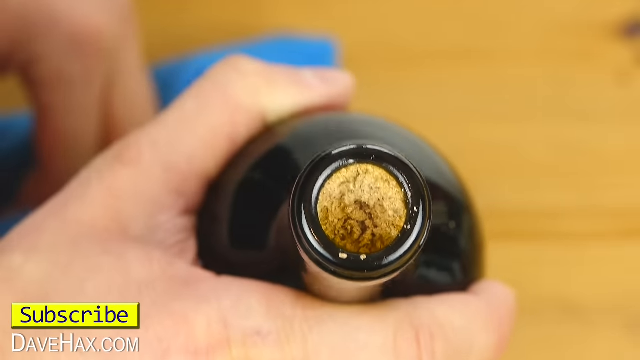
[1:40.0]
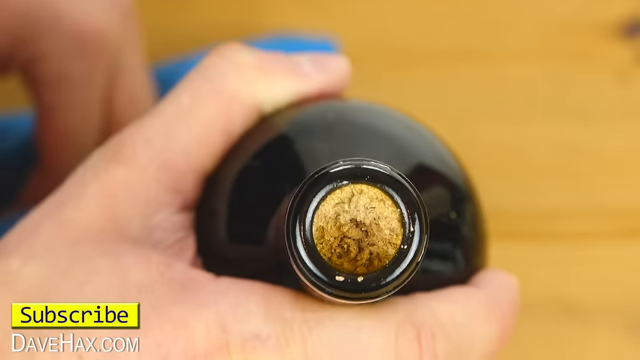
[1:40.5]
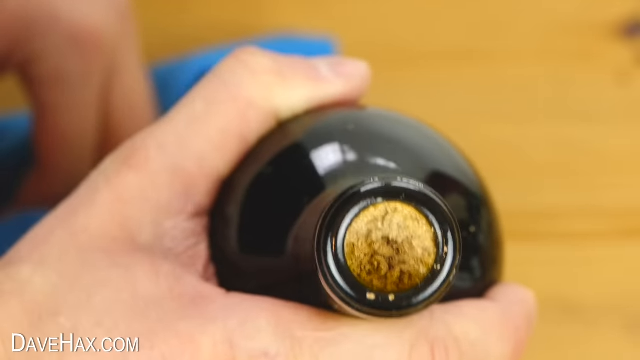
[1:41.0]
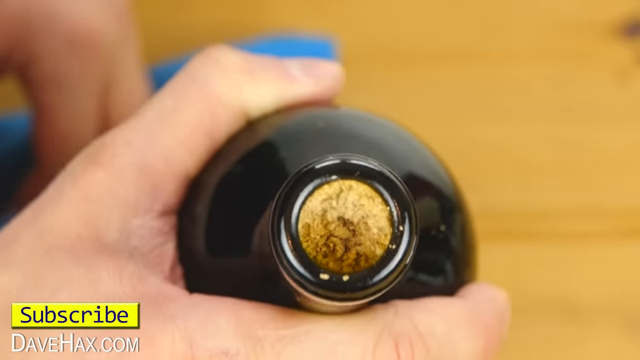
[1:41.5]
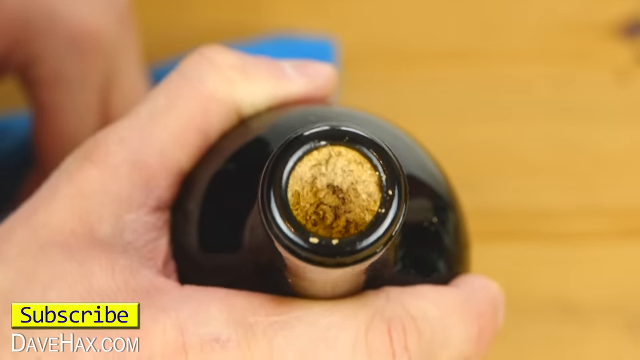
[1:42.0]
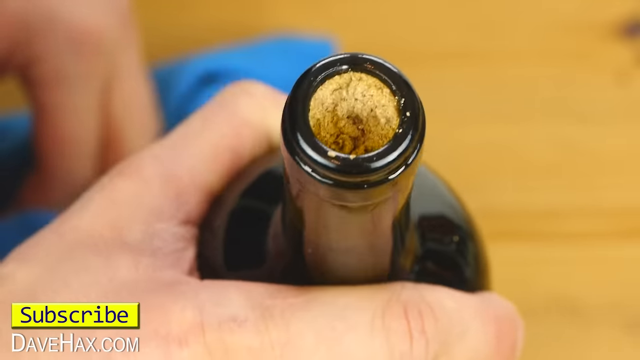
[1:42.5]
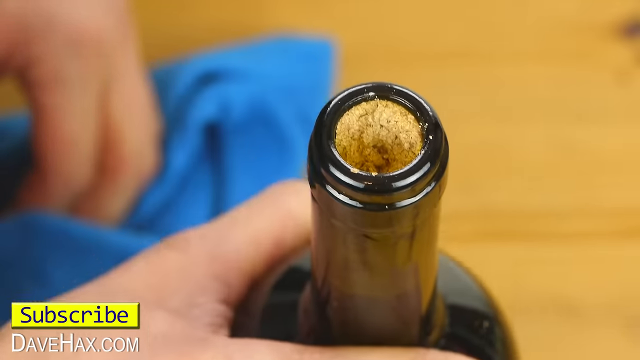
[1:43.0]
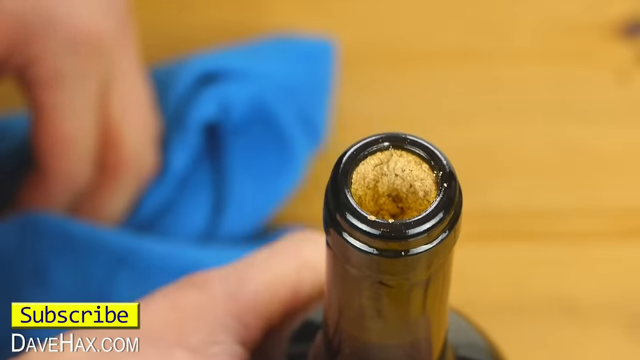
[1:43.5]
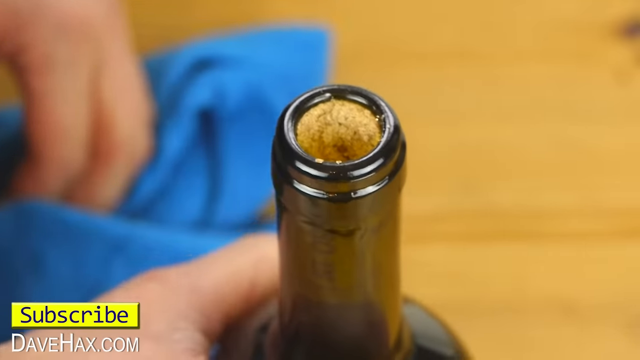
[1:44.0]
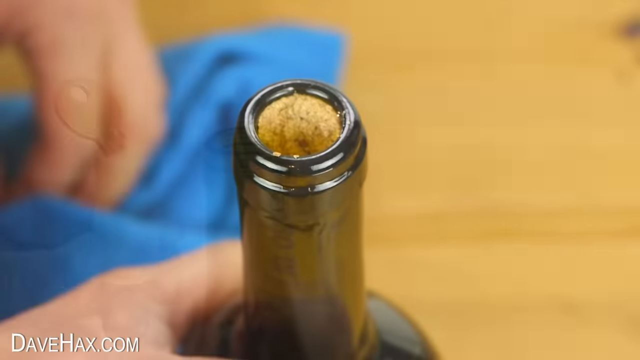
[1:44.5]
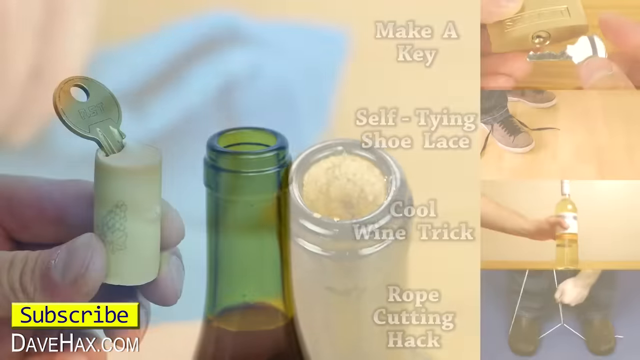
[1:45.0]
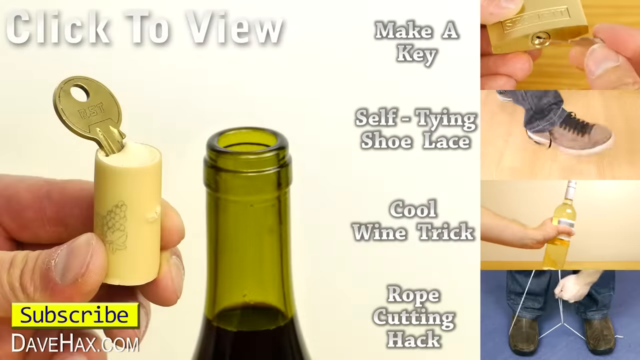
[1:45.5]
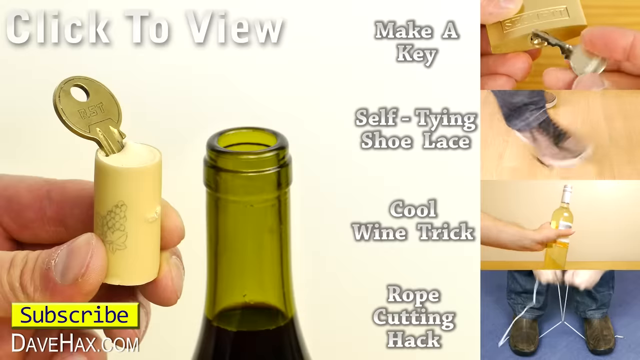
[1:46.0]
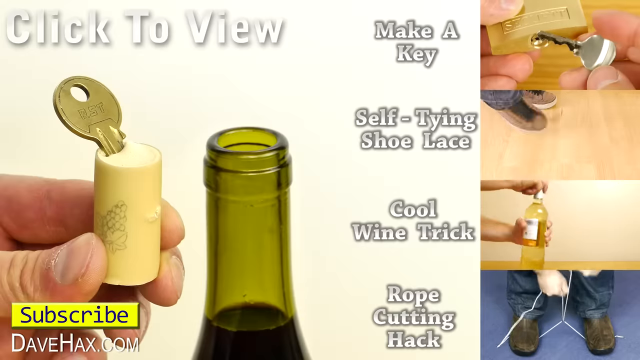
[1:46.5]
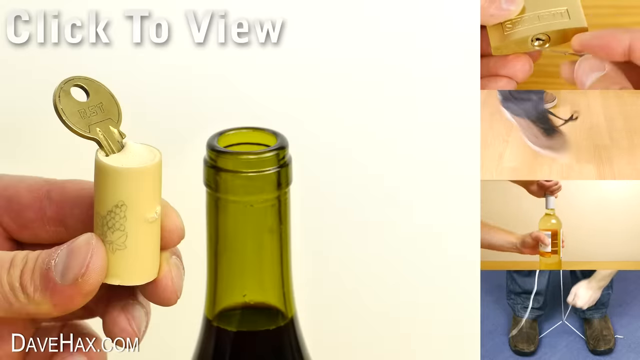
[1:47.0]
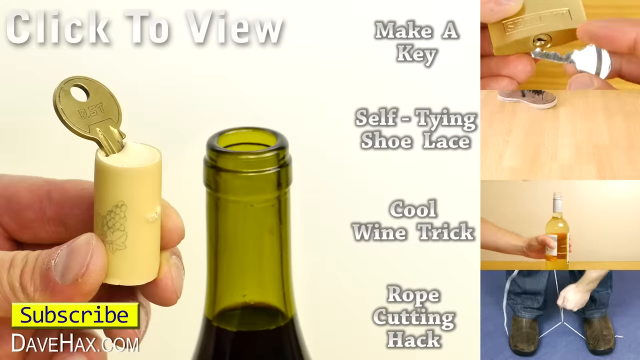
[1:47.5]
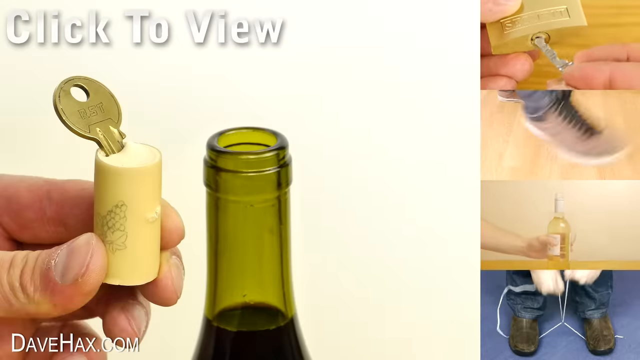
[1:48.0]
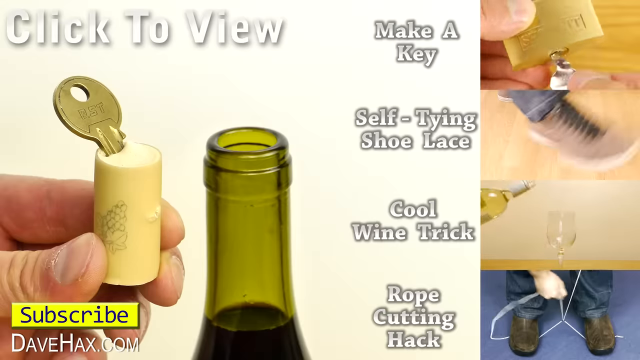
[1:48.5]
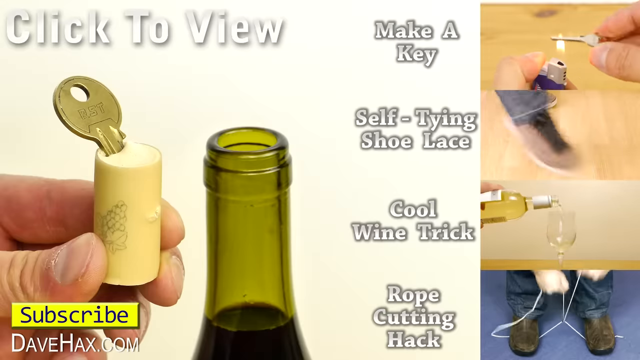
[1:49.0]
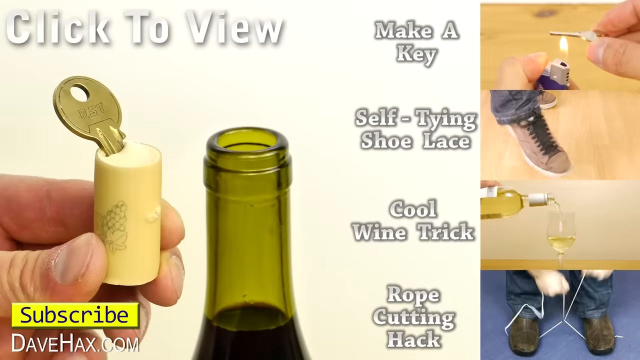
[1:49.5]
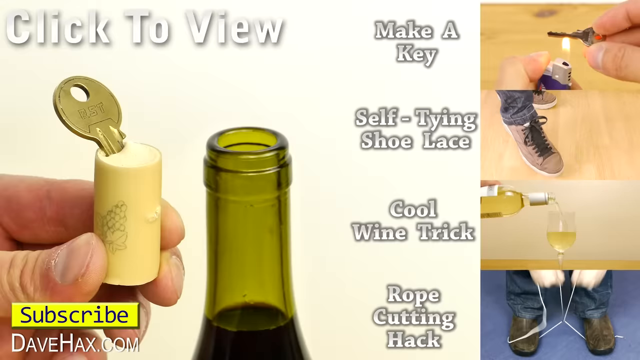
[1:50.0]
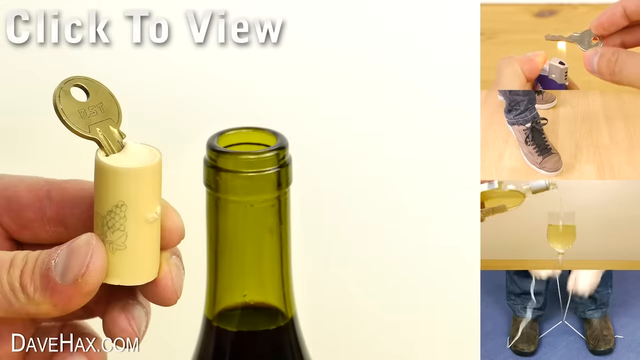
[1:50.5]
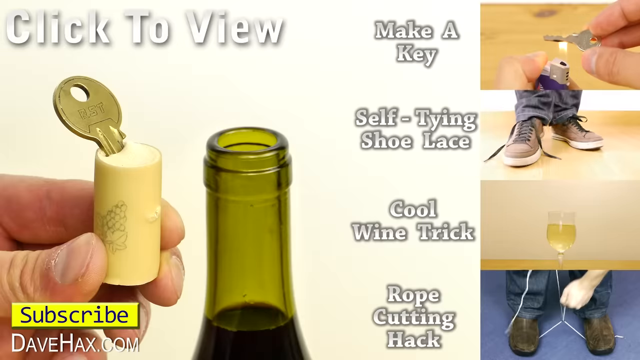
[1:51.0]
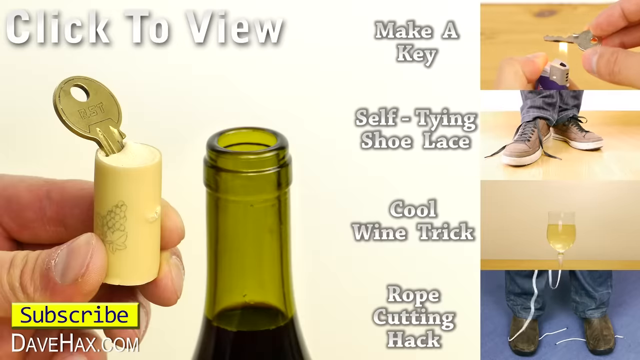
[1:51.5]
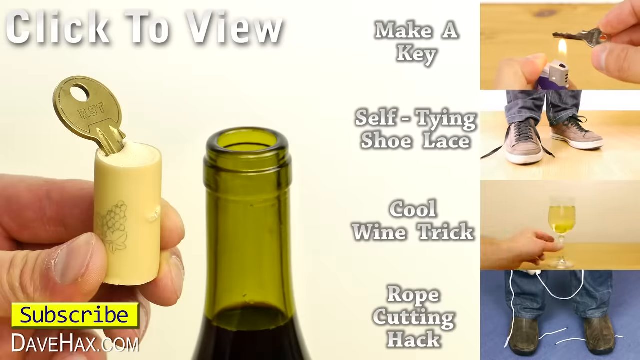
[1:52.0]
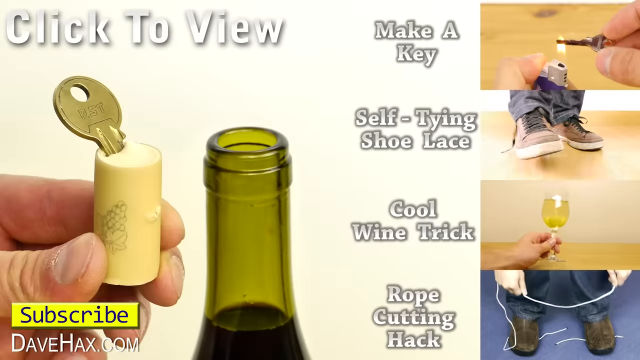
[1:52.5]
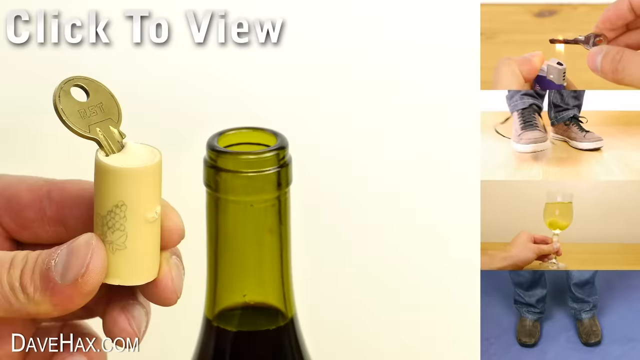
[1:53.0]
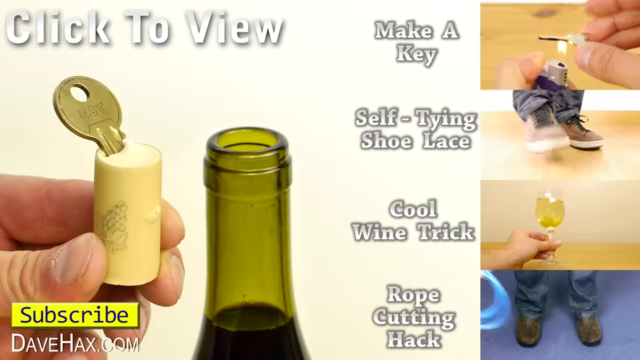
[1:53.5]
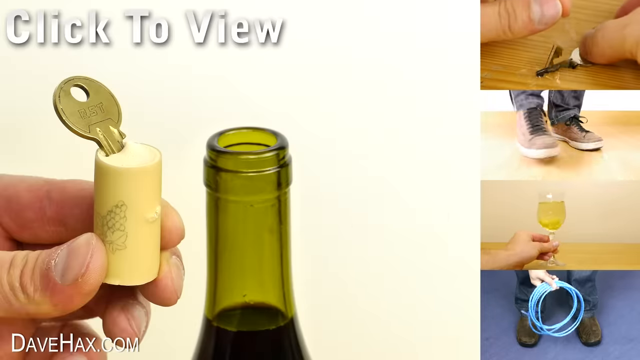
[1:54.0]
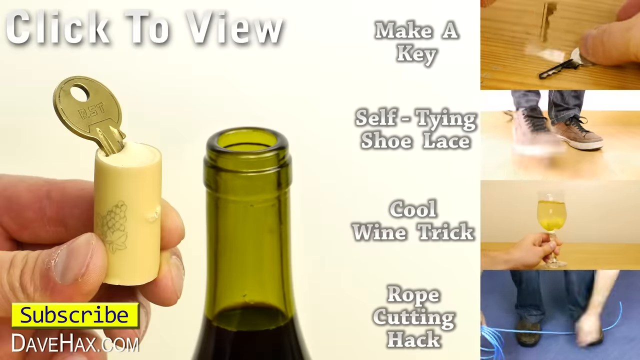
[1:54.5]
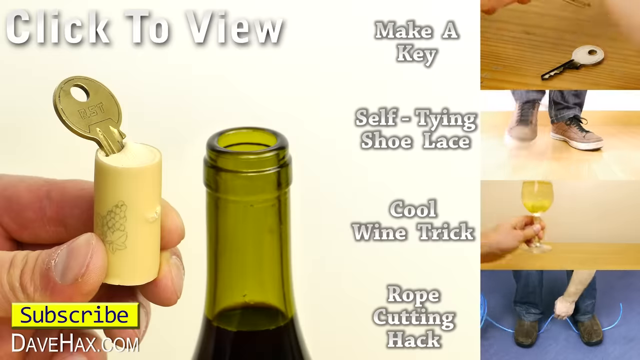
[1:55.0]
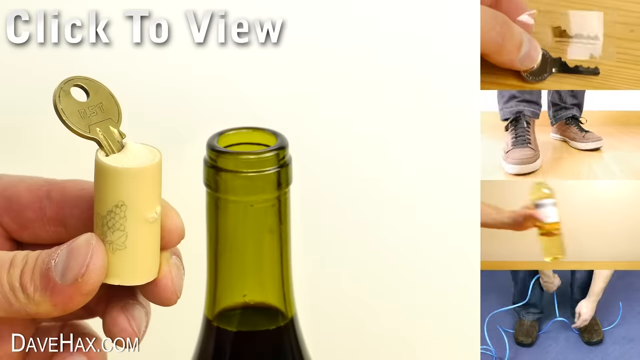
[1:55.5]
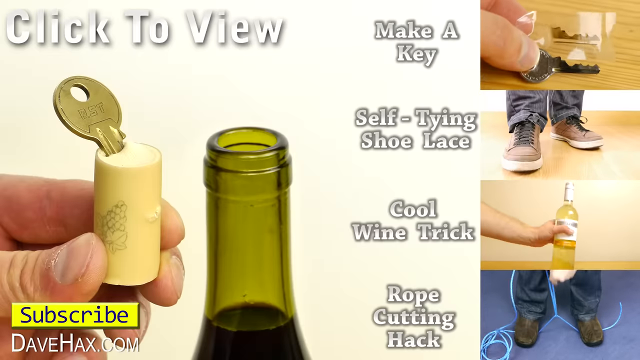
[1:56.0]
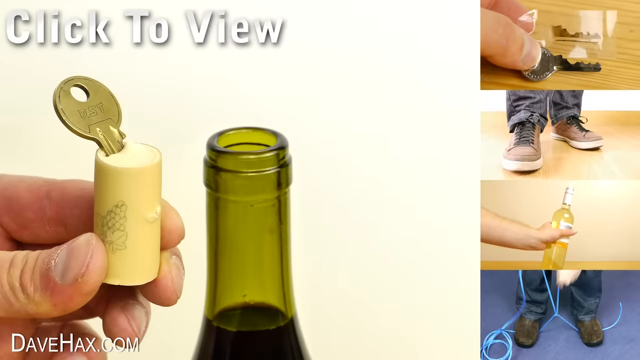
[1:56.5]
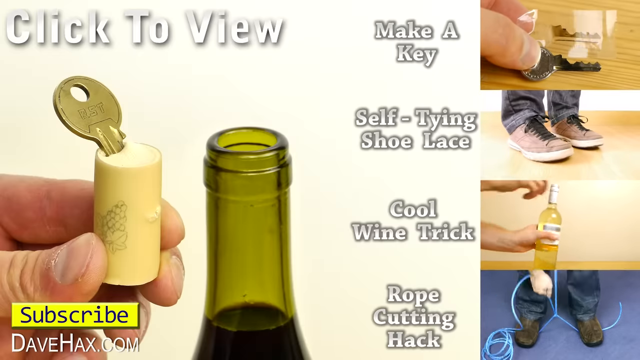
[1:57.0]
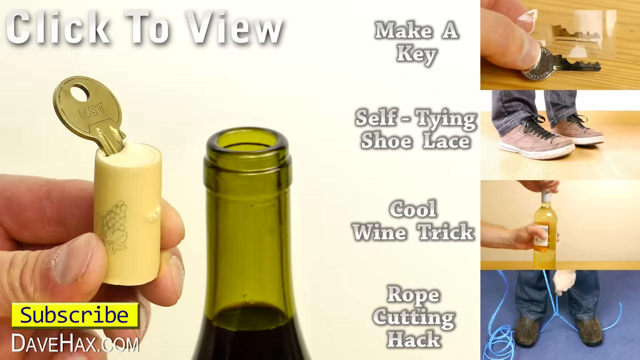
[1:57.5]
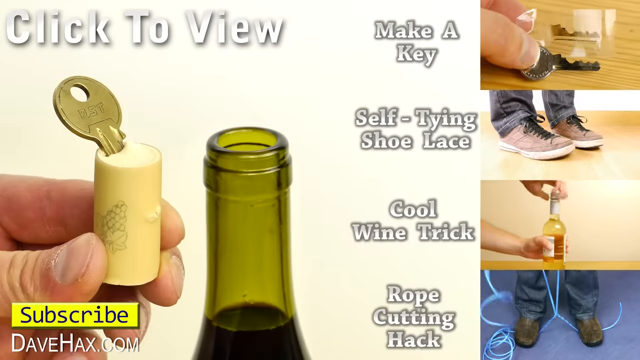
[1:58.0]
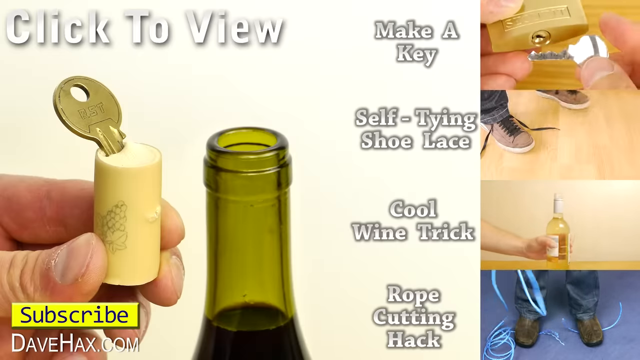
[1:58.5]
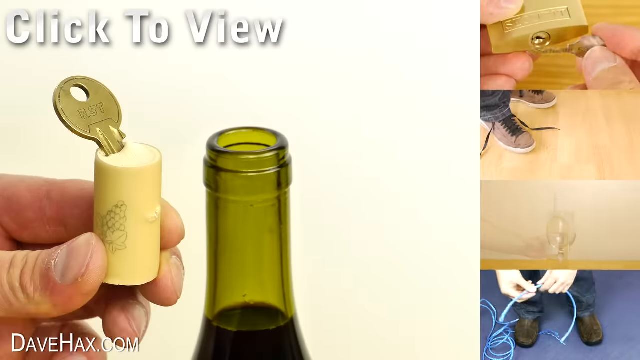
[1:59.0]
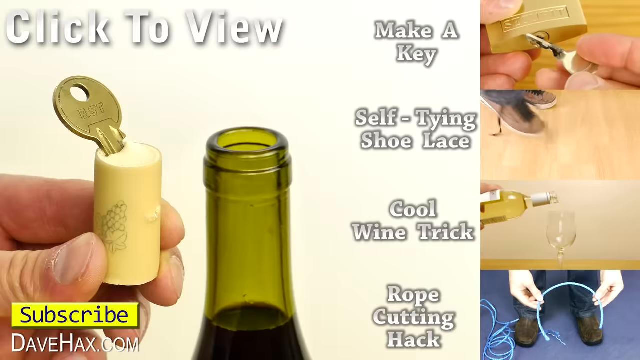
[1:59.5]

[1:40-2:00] The inside of the wine bottle is shown with the cork stuck in it. Text reads "click to view, make a key, self-tying shoelace, cool wine tricks, rope cutting hack", along with a subscribe button. The cork is not shown being taken out of the bottle completely.